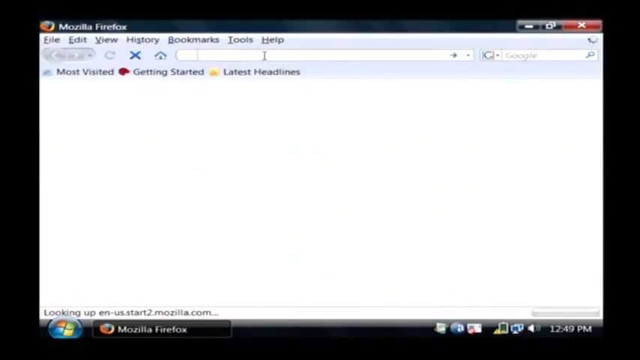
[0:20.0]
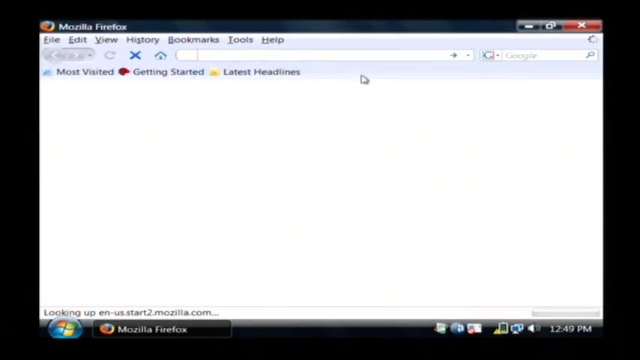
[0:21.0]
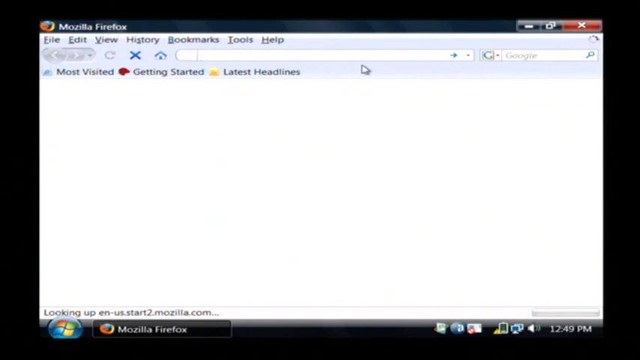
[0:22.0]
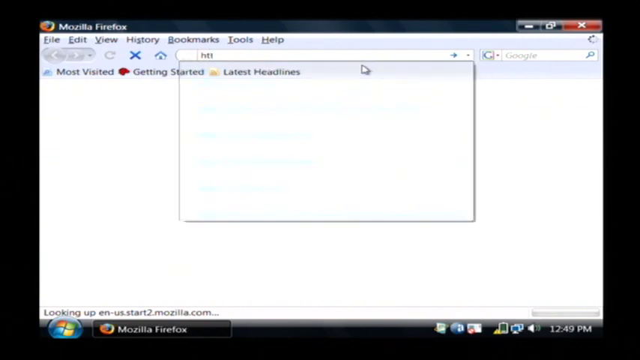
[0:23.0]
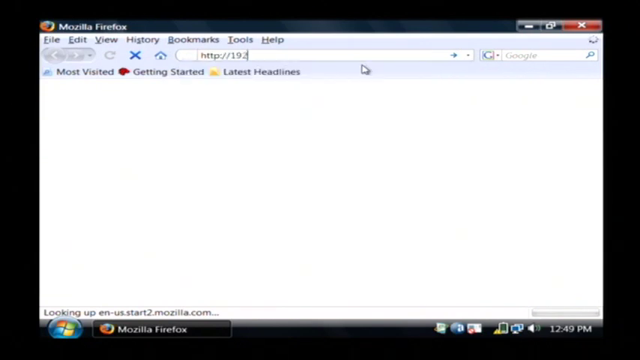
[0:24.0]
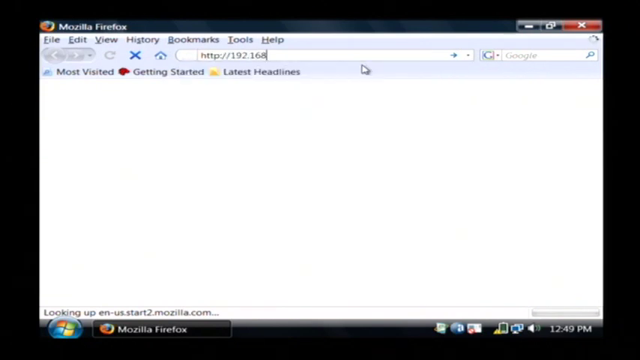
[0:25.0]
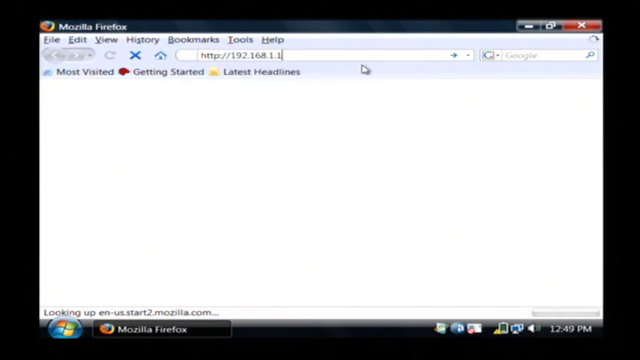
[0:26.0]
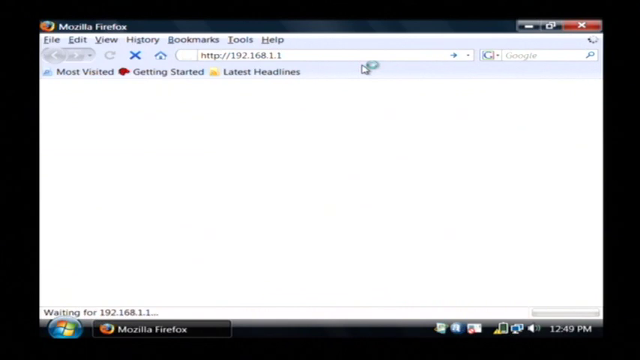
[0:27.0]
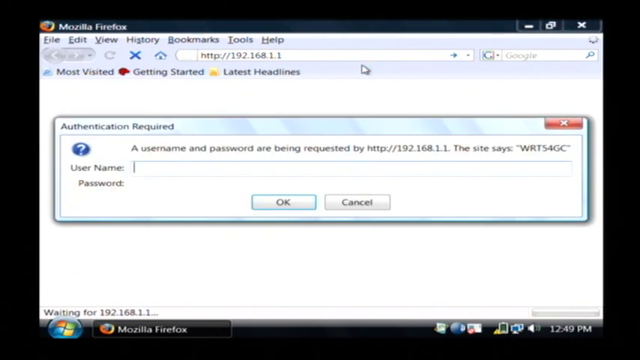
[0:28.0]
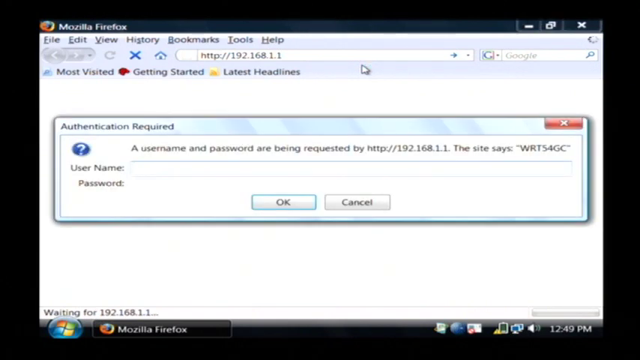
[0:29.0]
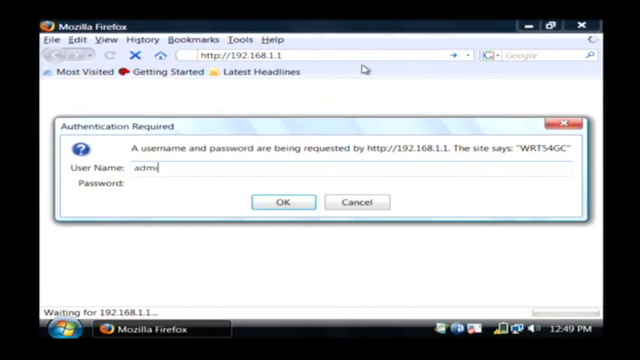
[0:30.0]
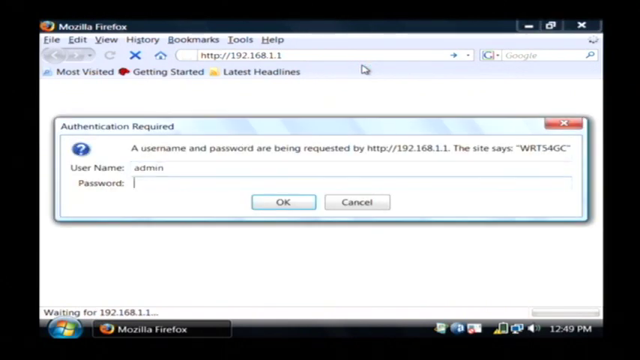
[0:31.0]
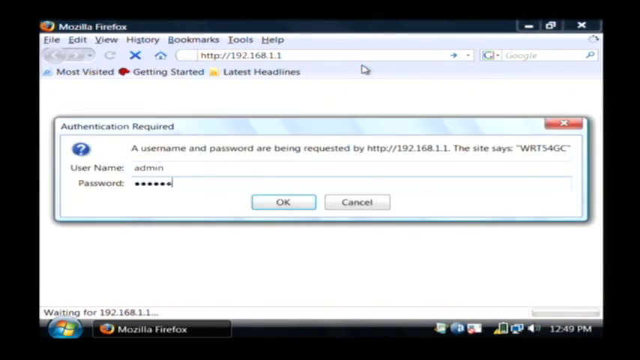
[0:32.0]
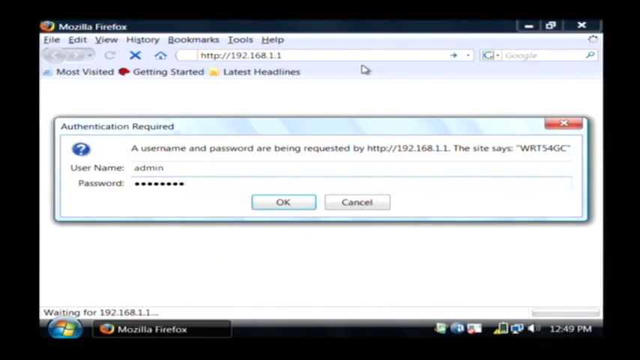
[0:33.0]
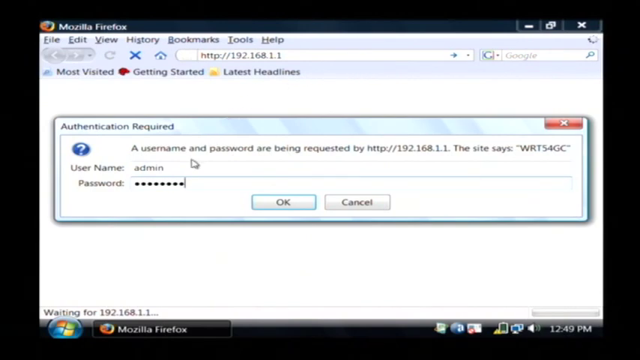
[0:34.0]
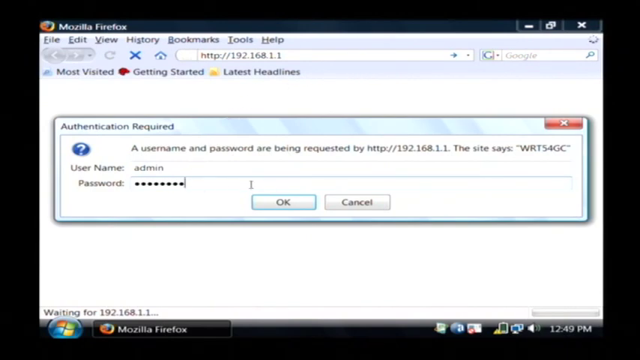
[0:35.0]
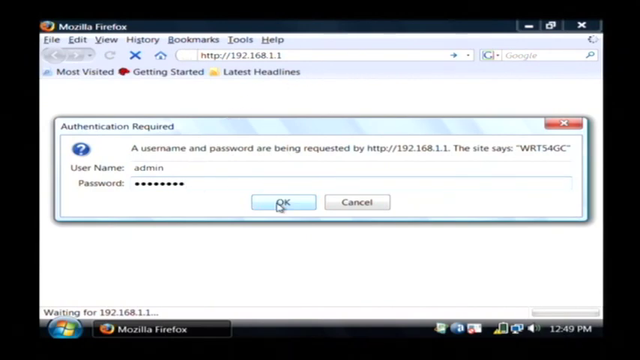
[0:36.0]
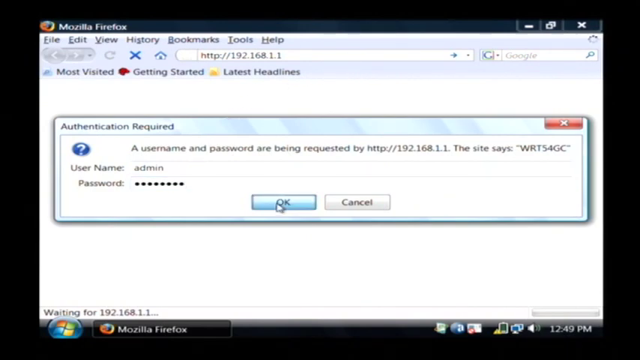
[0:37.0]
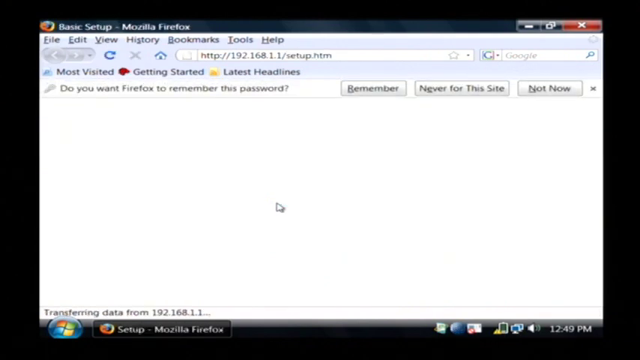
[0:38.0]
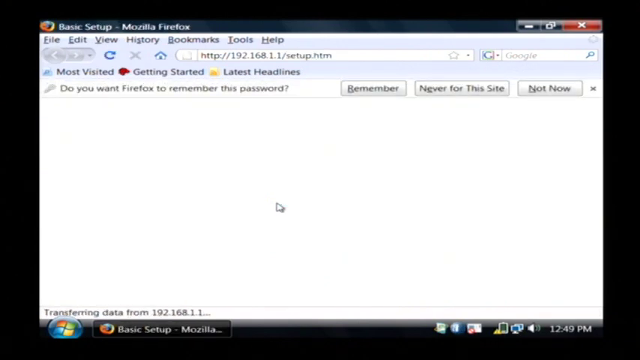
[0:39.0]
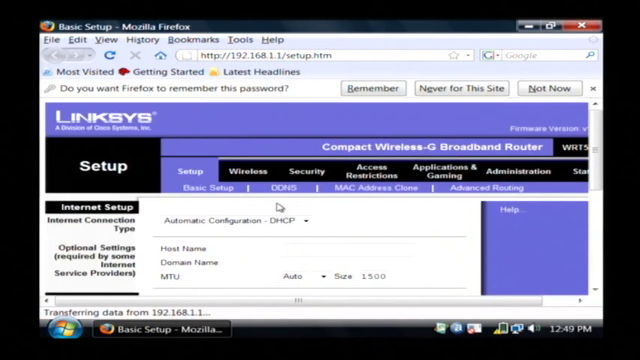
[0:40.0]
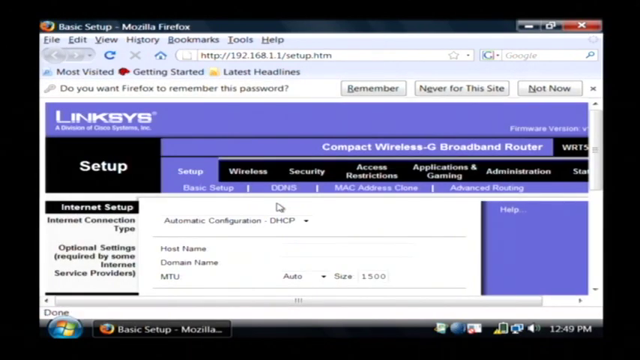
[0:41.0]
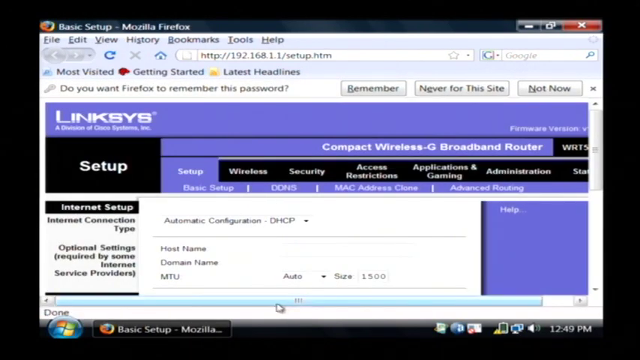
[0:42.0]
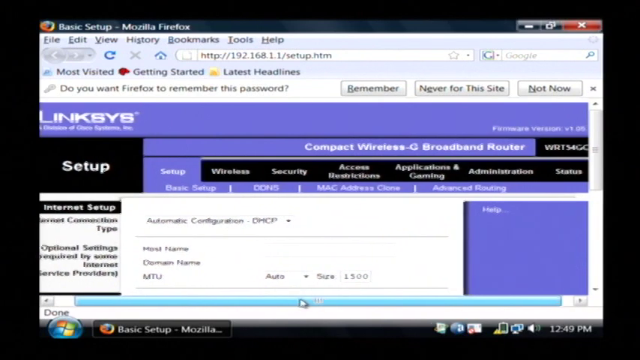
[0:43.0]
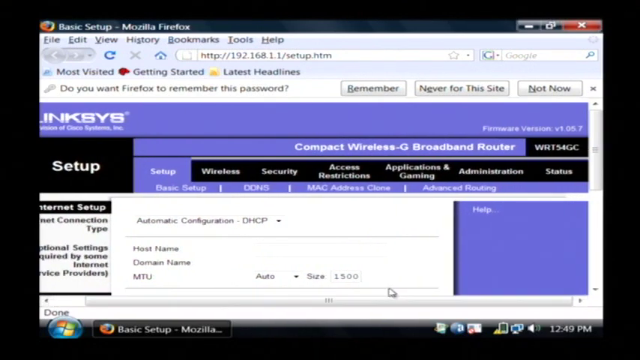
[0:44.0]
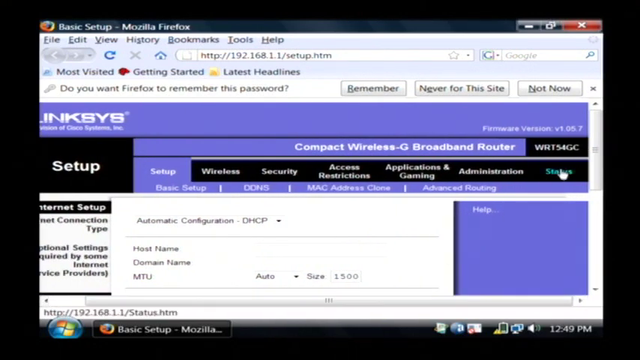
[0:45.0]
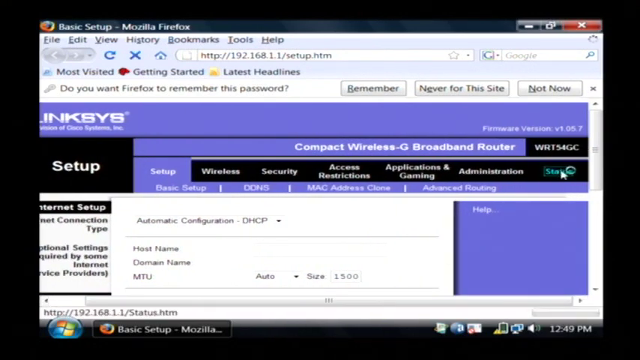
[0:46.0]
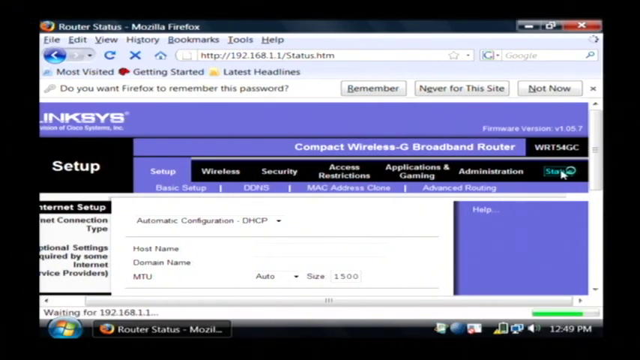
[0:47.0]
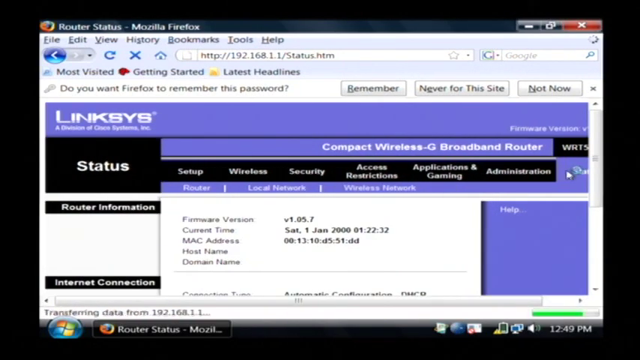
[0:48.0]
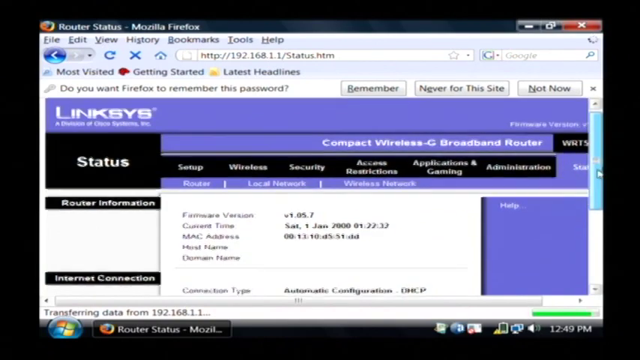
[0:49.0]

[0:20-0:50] The person clicks inside the top search bar and moves the cursor around the display, then some letters and then some numbers are typed into the search bar. It appears Enter is pressed, as something looks like it is loading in the search bar. A dialog box pops up that says "authentication required," with a field beside the username section. The person appears to type the word "admin" into the username field. Underneath is a password field, where a password is typed but hidden by black dots. The cursor moves onto the OK button and clicks OK. The page continues to load and opens a website that says "link sys." He drags the mouse cursor to a horizontal bar at the bottom that controls the position of the screen and moves the bar to the right. He then clicks on a green word in some kind of header menu that might say "status." The blue circle moving in a circle appears beside the cursor, indicating the page is loading, and the new page appears. He moves the cursor to a bar on the right-hand side of the display that adjusts the position of the screen and drags it downwards.